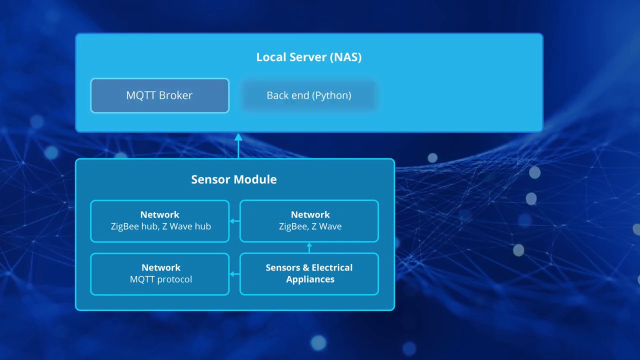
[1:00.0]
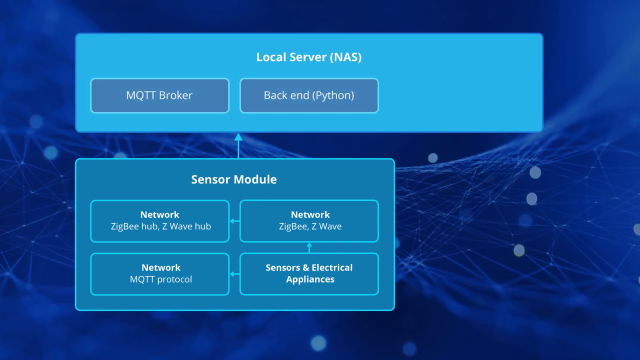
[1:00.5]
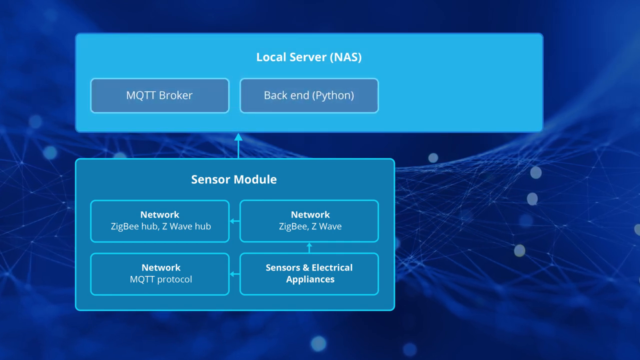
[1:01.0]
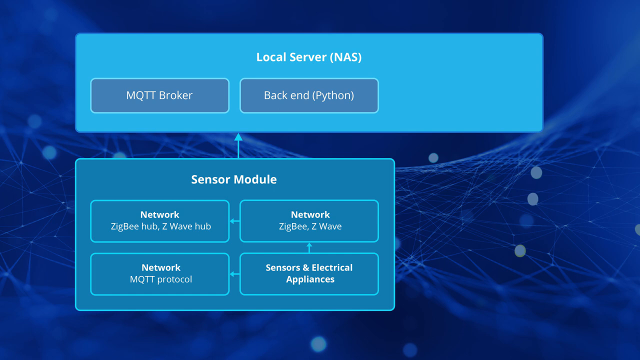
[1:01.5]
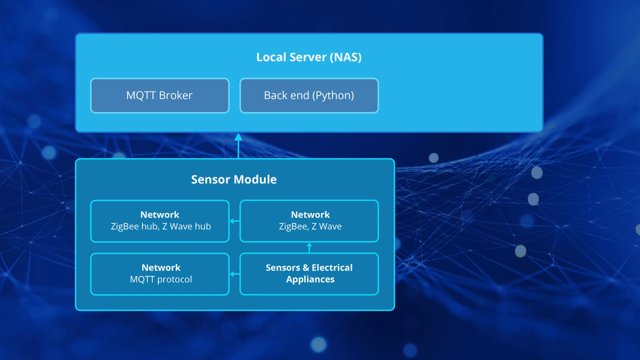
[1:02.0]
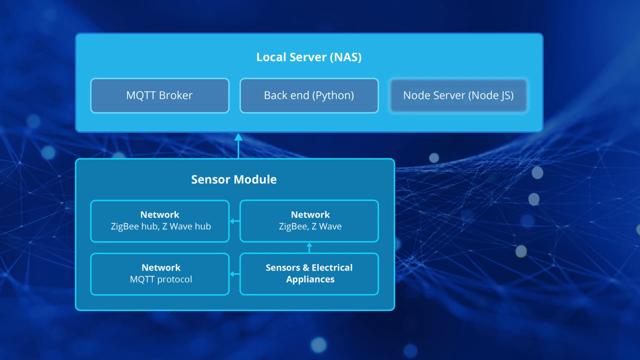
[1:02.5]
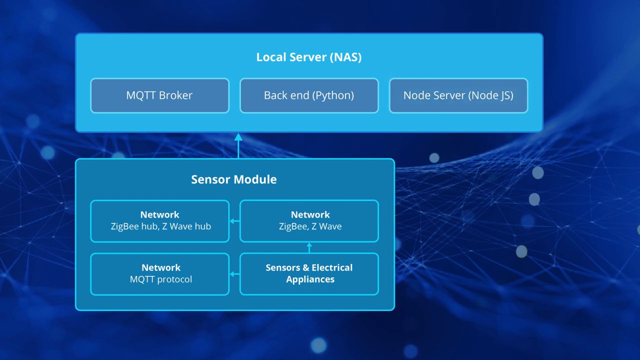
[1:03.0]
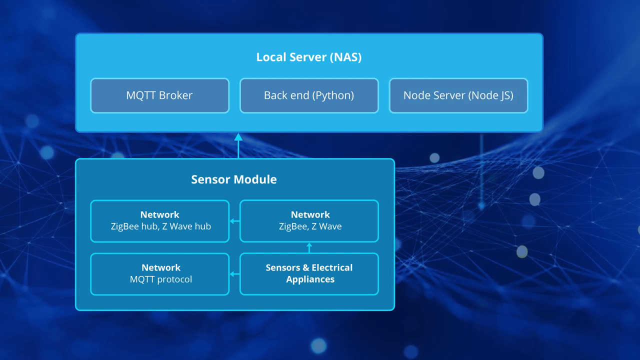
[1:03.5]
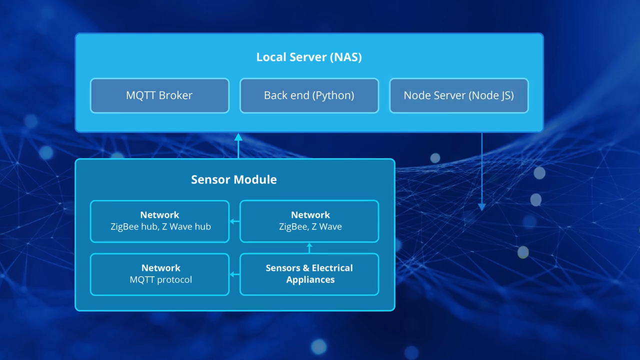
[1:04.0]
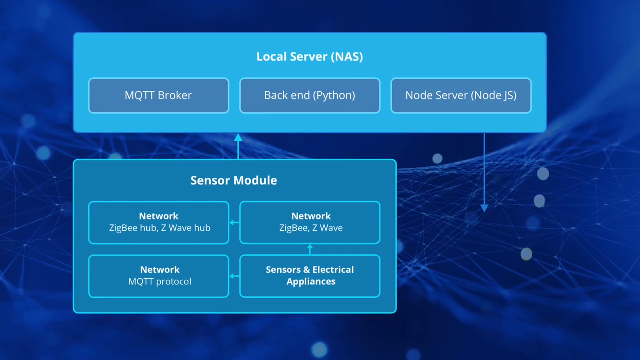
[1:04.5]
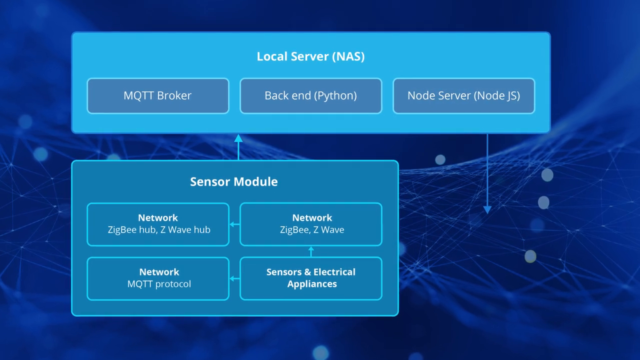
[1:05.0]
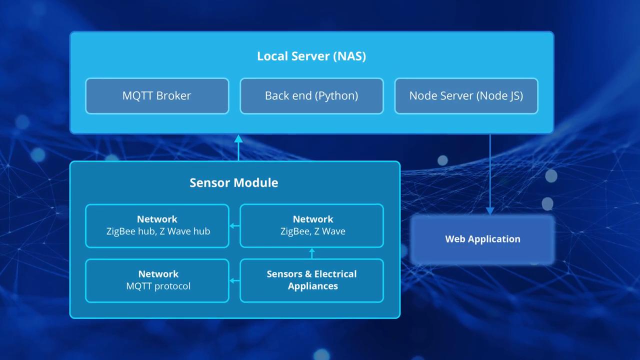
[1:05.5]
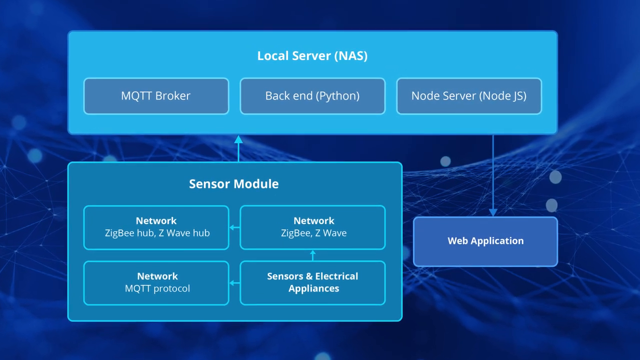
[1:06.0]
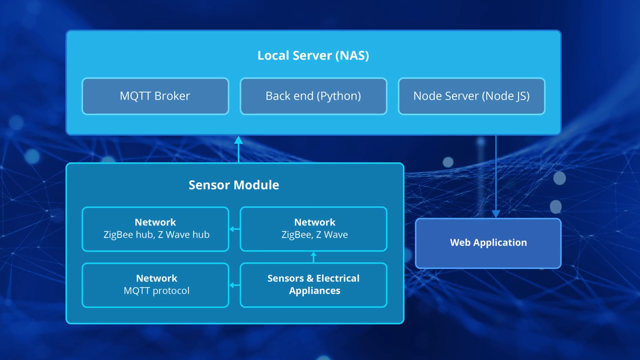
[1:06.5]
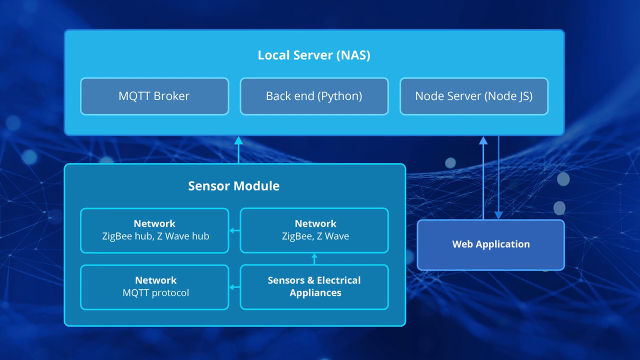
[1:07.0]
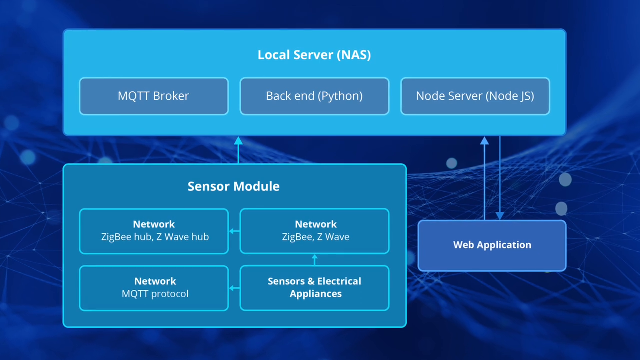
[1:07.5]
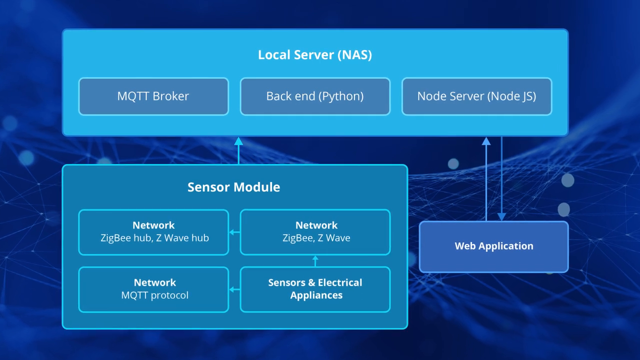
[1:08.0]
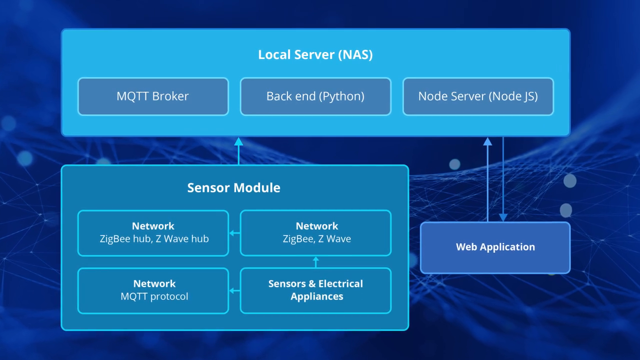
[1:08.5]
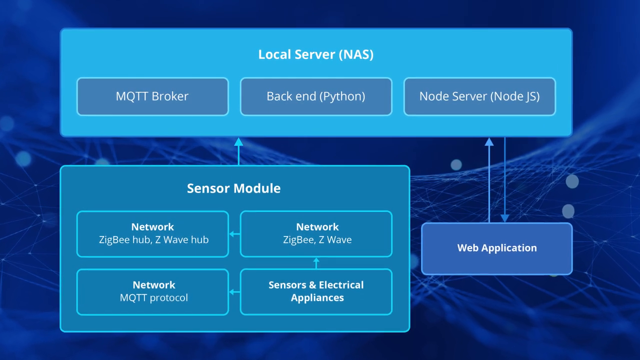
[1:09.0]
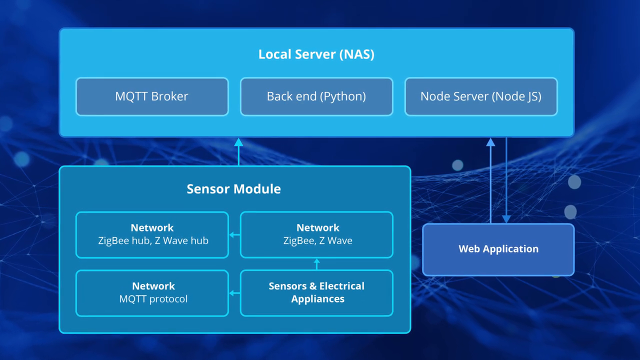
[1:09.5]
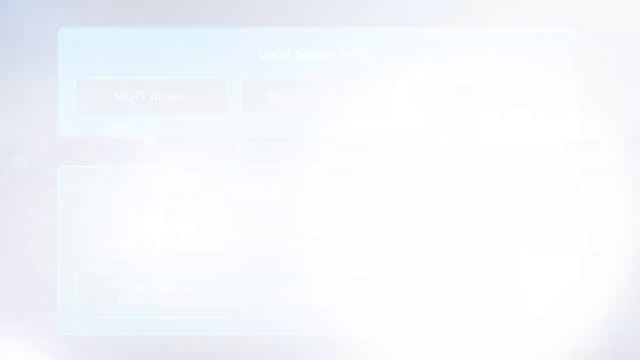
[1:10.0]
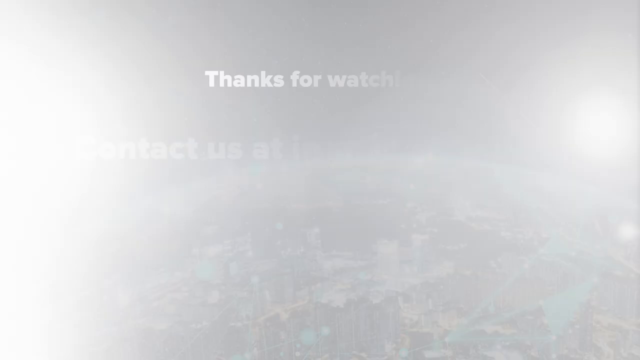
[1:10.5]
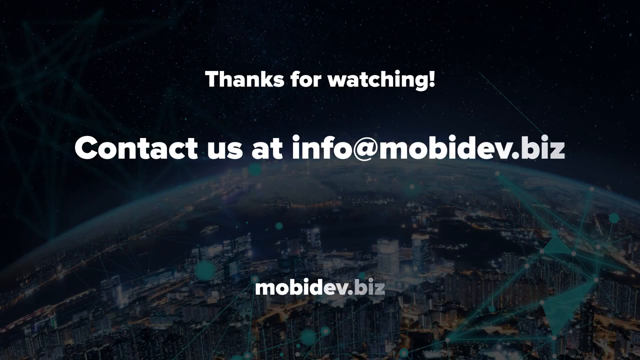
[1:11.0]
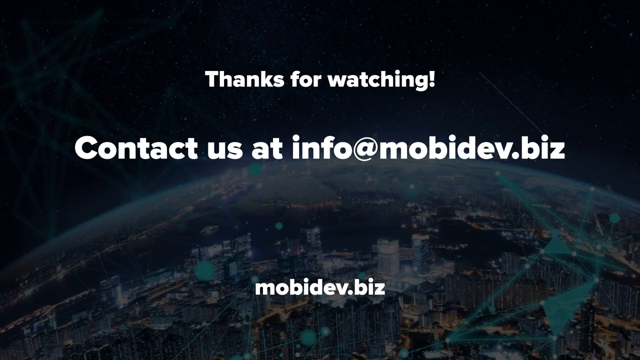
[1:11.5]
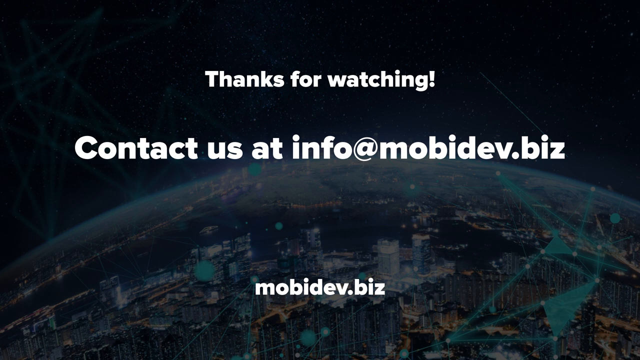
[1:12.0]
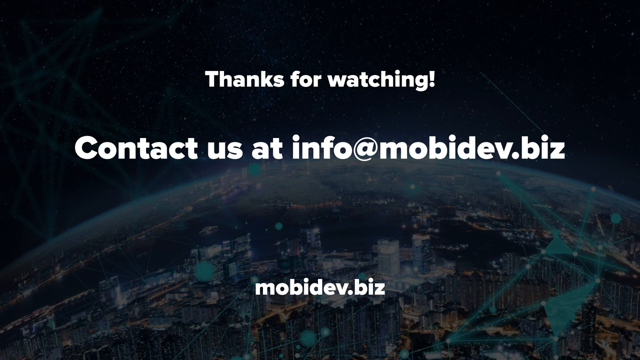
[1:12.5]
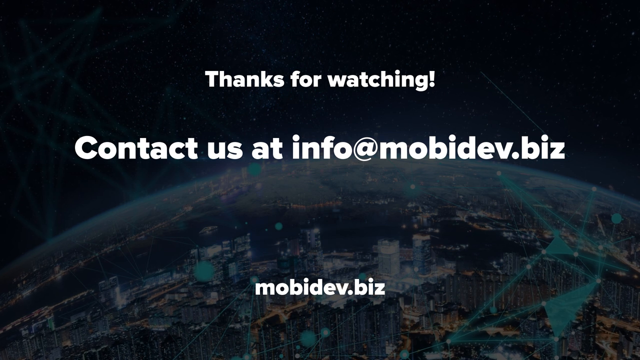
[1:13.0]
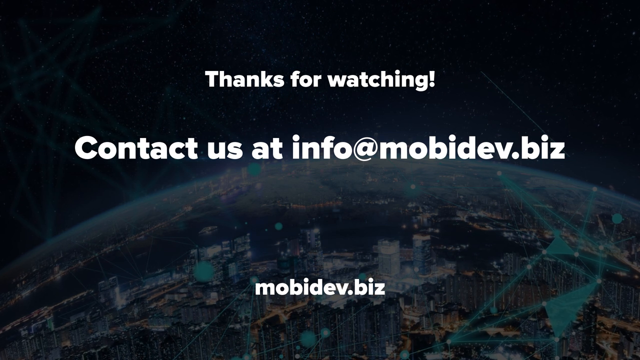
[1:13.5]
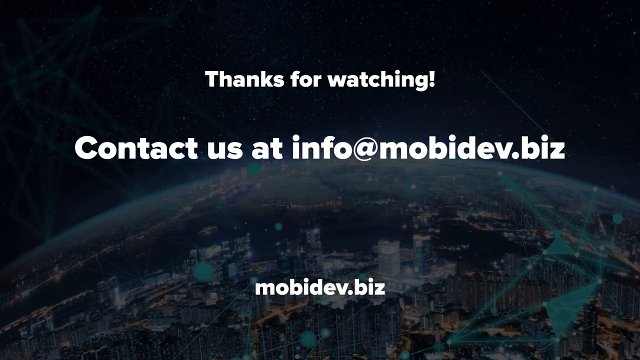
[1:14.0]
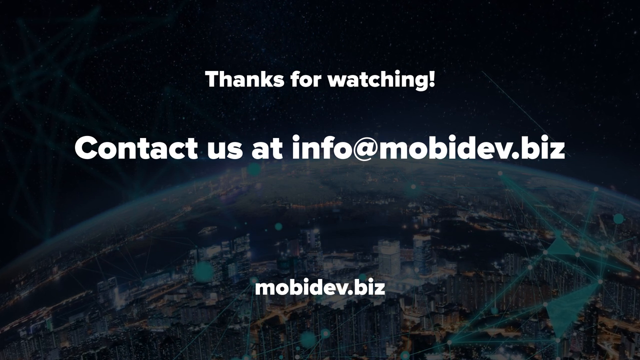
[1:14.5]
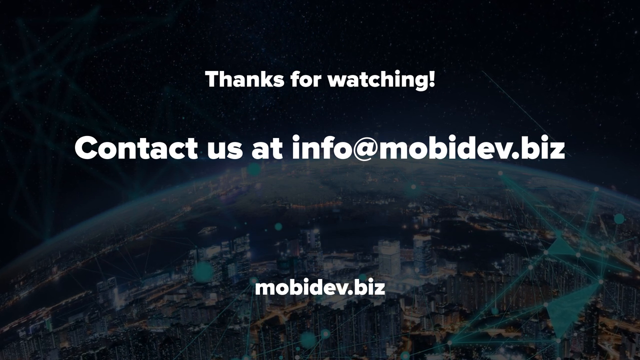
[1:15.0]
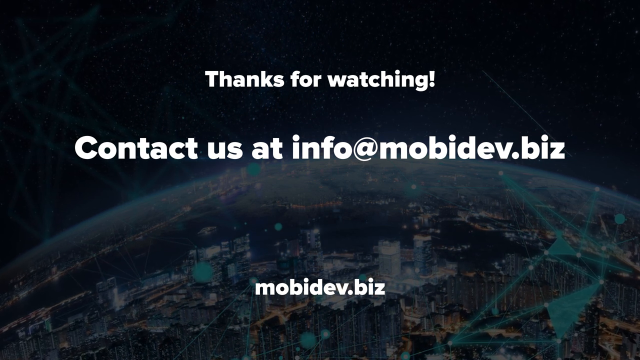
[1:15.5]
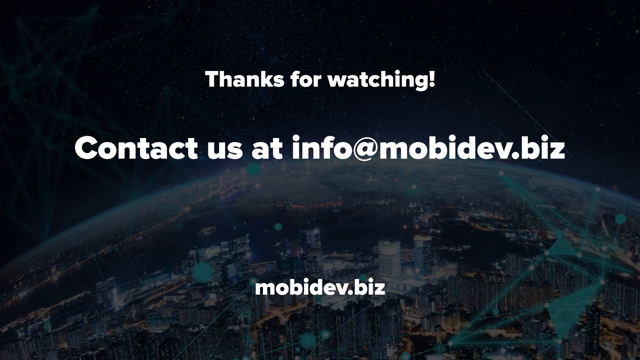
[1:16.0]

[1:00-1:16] The same screen with the same background is shown, now zoomed out a little, revealing that the rectangles seen before are encased inside a bigger rectangle labeled "Sensor module." Inside the sensor module there appear to be the sensors and electrical appliances plus the different network connections. An arrow goes up from the sensor module to the local server, or the NAS, which has an MQTT broker. The back end is in Python, and there appears to be a Node server on it for running the web application. In the lower right corner, a rectangle reads "Web application," with an arrow going from Node to it. The diagram appears to show Node serving the front-end web application to the user, which submits to the Python back end, which in turn uses the MQTT protocol to communicate with the physical hardware on the network.